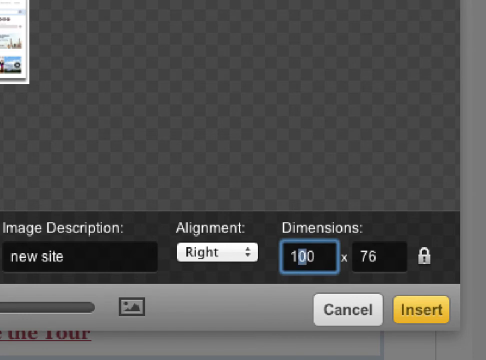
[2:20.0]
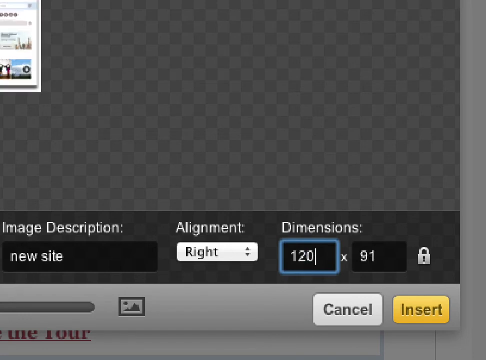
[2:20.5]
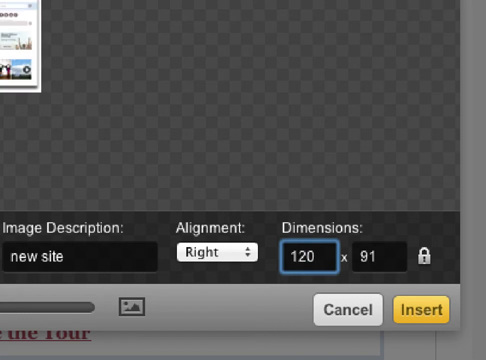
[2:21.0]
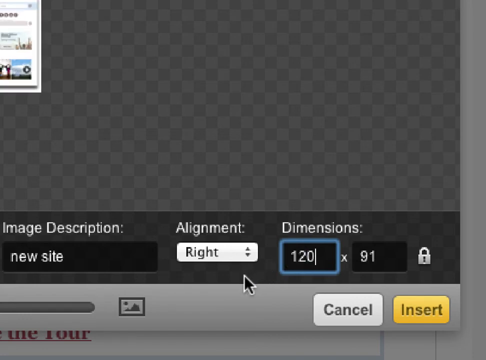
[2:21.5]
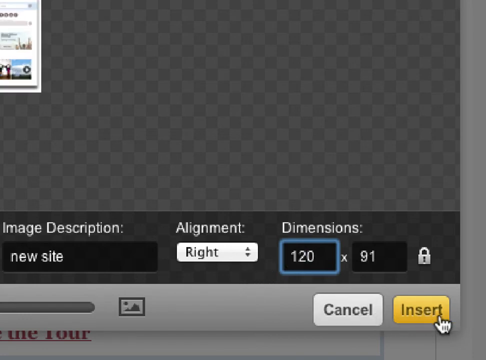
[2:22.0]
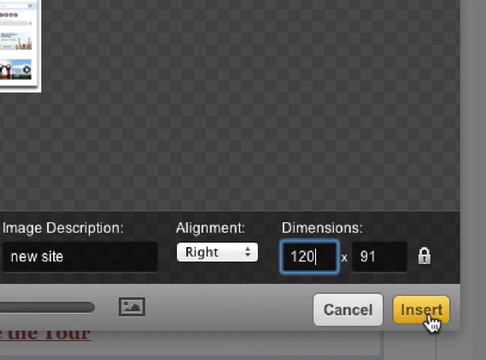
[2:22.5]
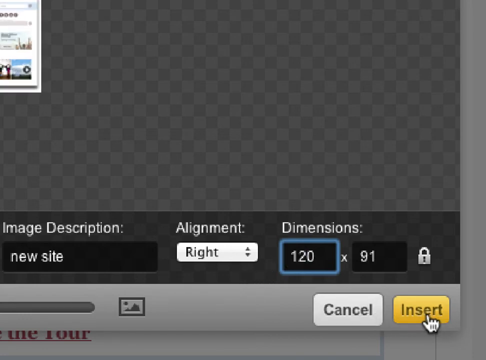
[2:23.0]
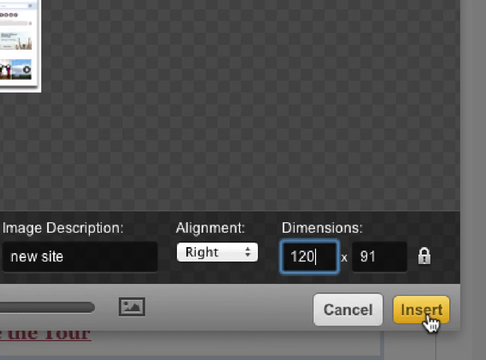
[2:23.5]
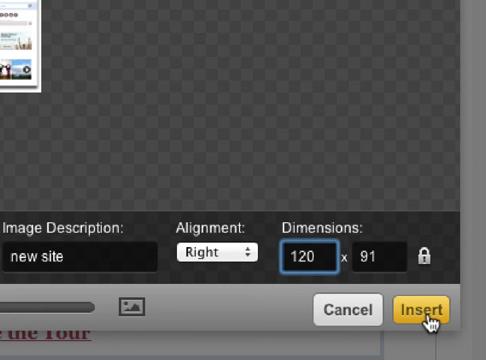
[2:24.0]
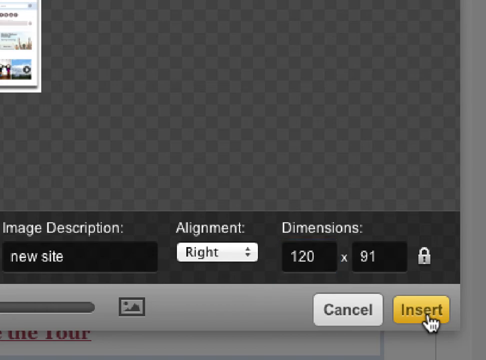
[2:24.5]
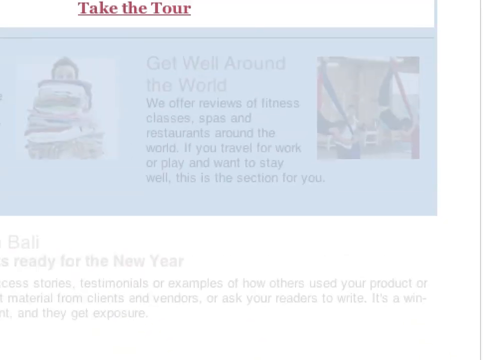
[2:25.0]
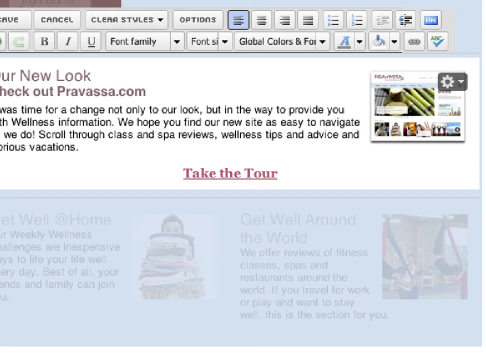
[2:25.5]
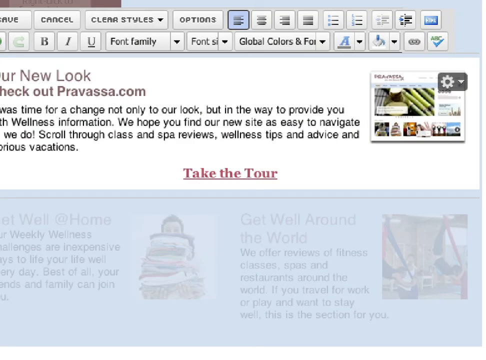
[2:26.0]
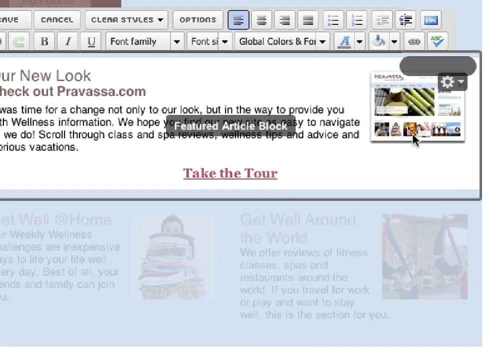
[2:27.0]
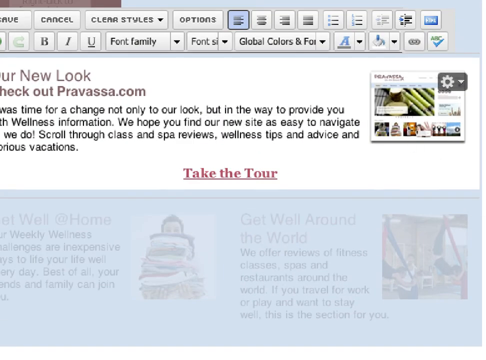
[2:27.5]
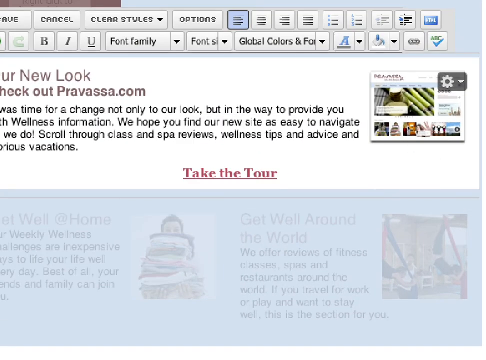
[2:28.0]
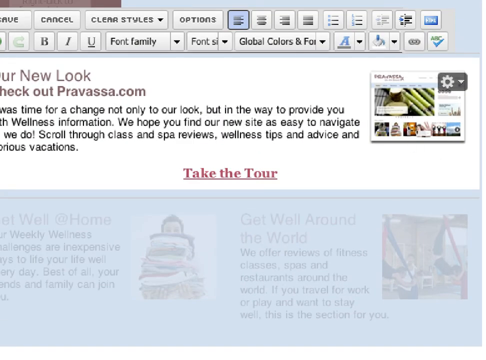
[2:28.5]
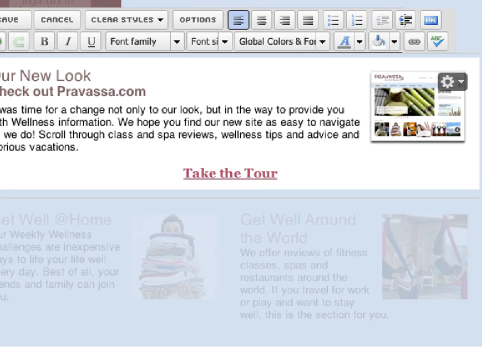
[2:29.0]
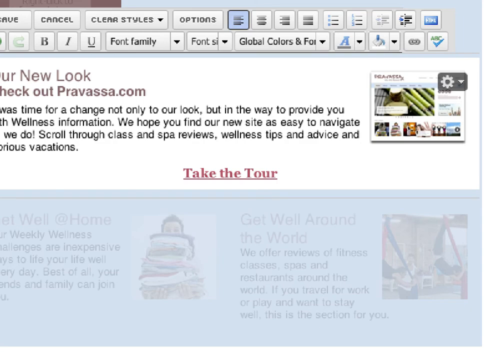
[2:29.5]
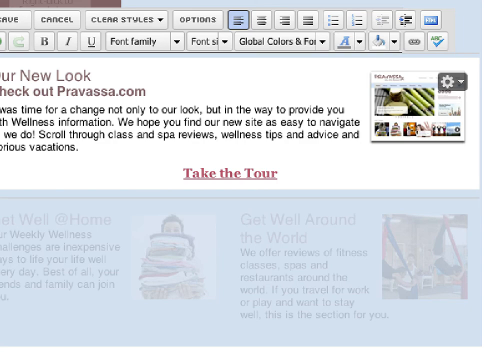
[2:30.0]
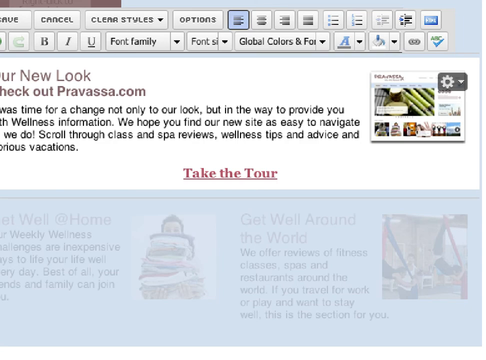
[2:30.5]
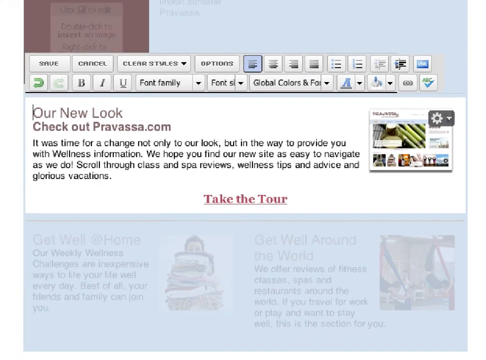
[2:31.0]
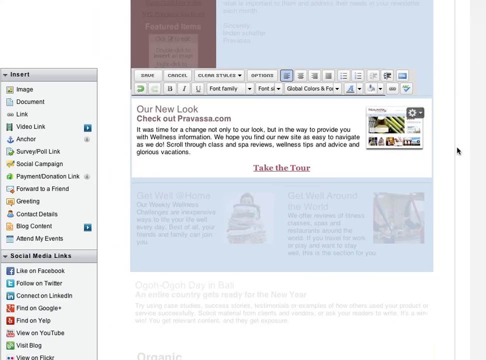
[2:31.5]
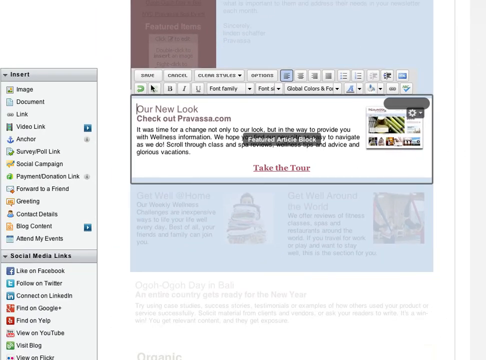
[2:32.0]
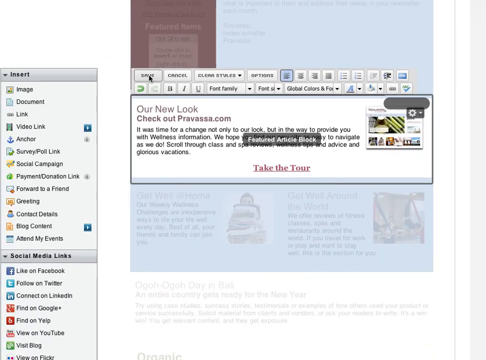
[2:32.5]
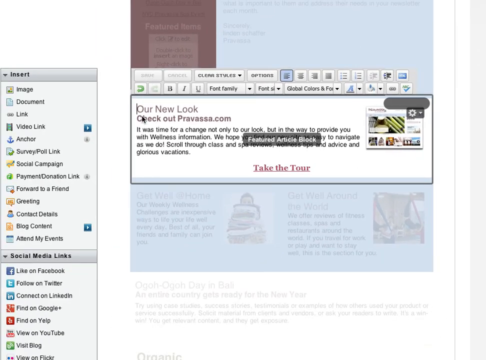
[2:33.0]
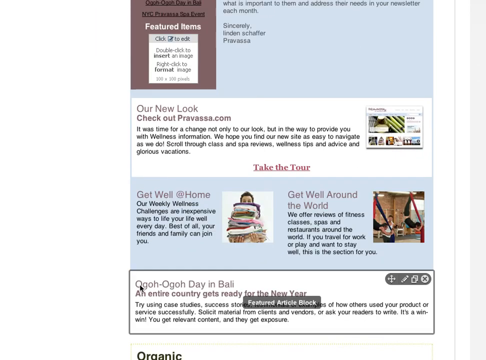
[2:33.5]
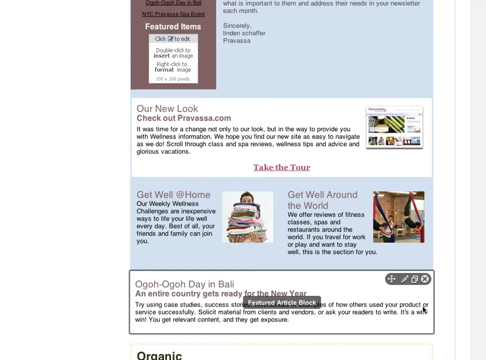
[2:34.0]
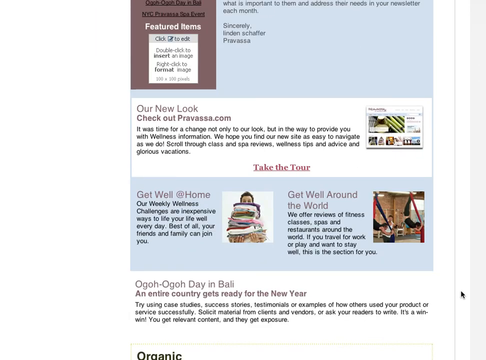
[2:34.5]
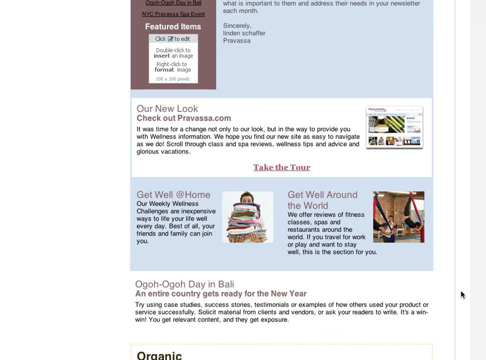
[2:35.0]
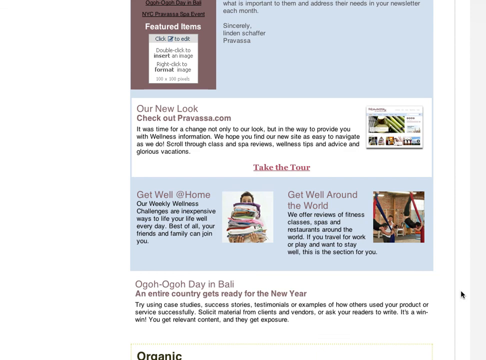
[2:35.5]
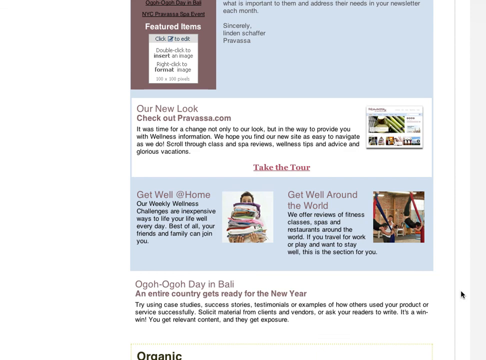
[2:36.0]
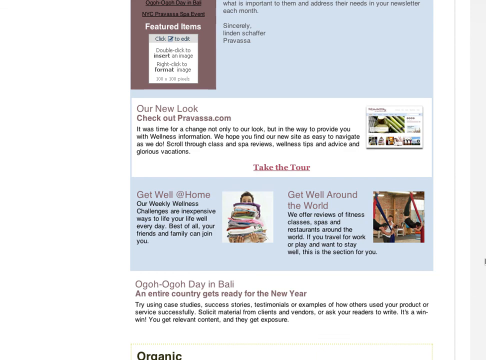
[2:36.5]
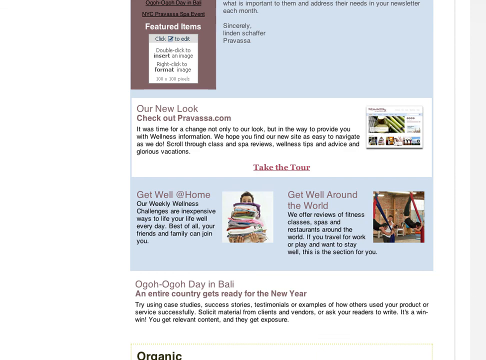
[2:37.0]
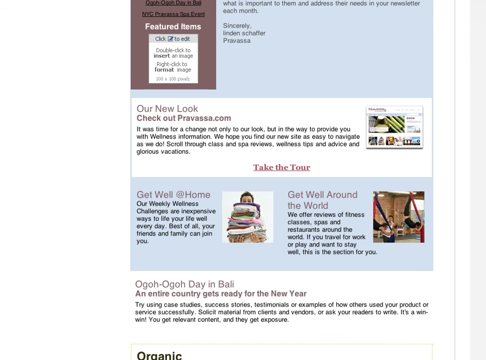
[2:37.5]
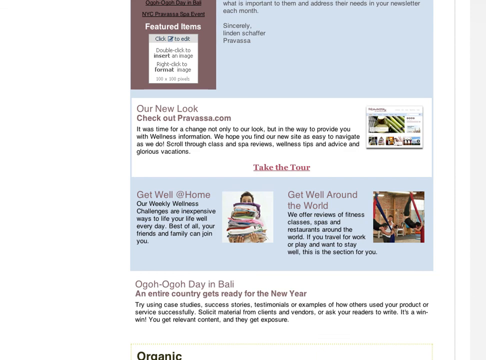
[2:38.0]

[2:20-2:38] The screen shows the dimensions section, with the first box, where the numbers are entered, clicked and outlined with a blue square. The cursor hovers over the middle and changes the zero to a two, changing the value from 100 to 120, with 91 as the other dimension, and the hand moves down to "insert". The view comes back up to the main area showing the new look for Pervasa and zooms out. The cursor goes to the left and clicks the bar icon, then moves to the right and scrolls back to the beginning, looking at the different pictures and frames on the screen. There are highlighted sections, with the second section highlighted in blue. The first section's paragraph reads "the new look. Check out pervasa.com". To the right is a picture resembling the one just being worked on, and the words "take the tour" are highlighted as a clickable hyperlink. Below that is a blurred-out light blue section with some distinctive features visible: in the middle left, a person wearing folded-up clothes, and in the right middle, the words "get well around the work".